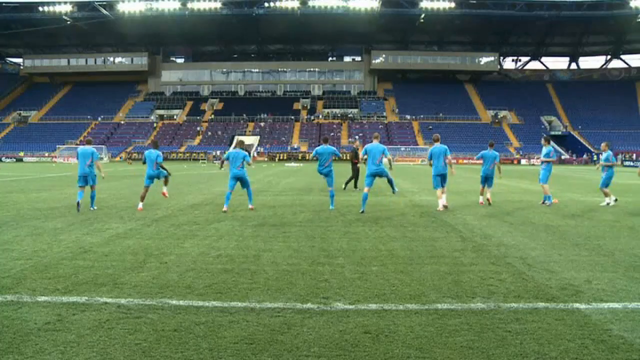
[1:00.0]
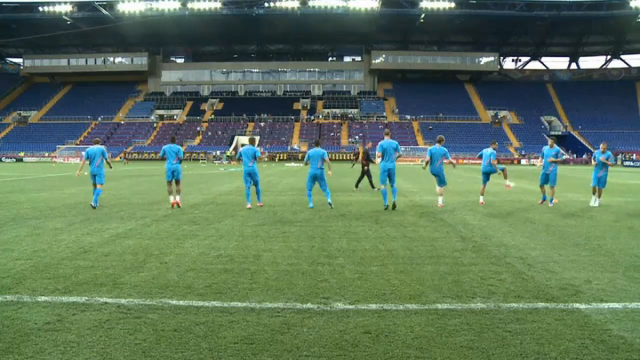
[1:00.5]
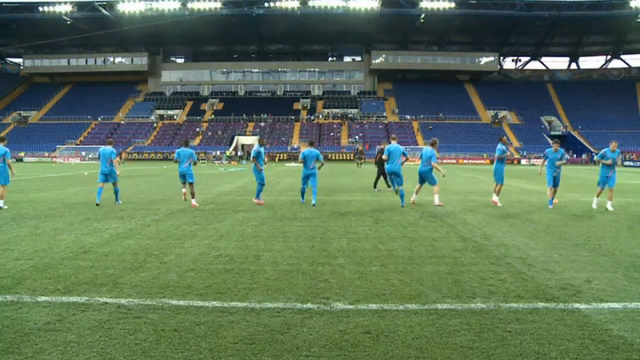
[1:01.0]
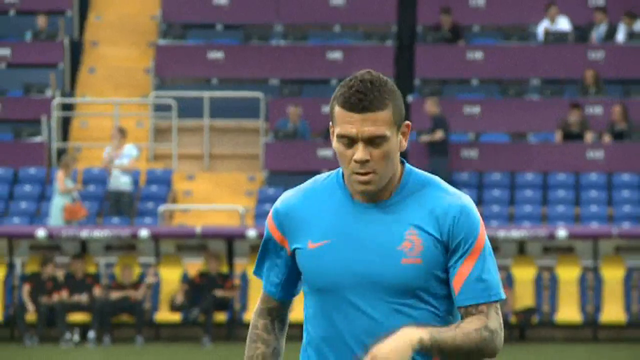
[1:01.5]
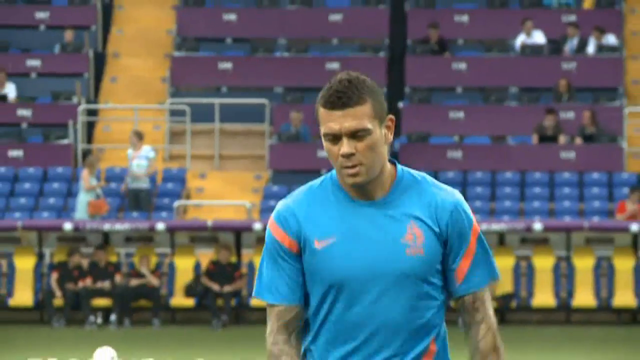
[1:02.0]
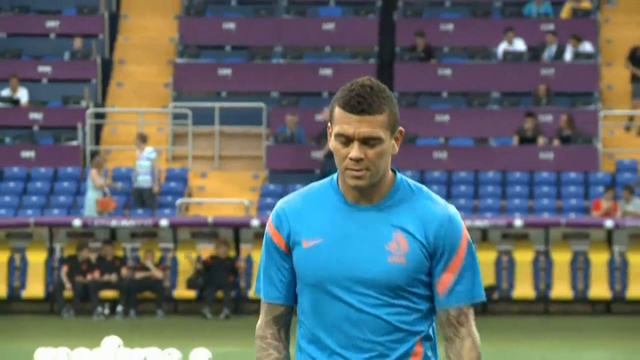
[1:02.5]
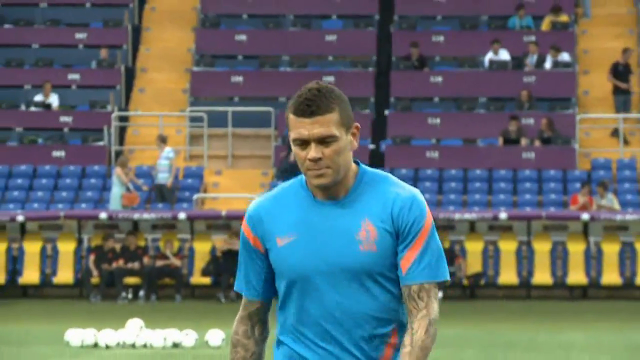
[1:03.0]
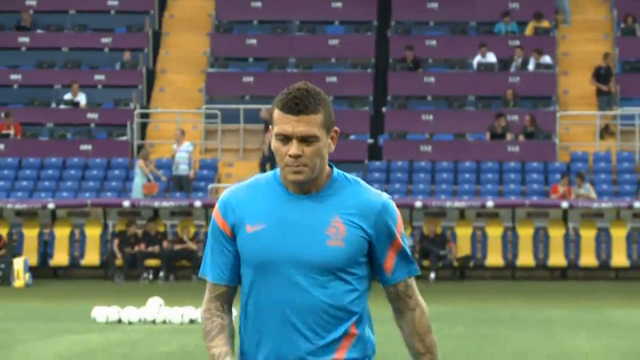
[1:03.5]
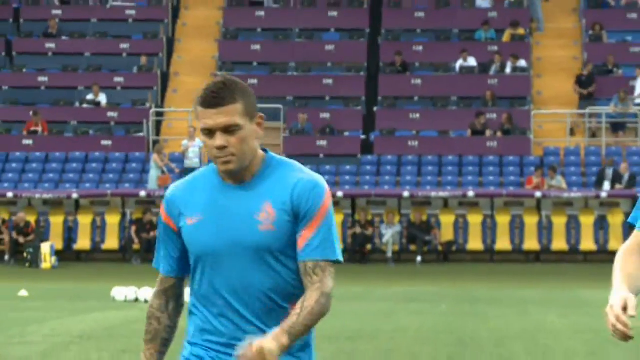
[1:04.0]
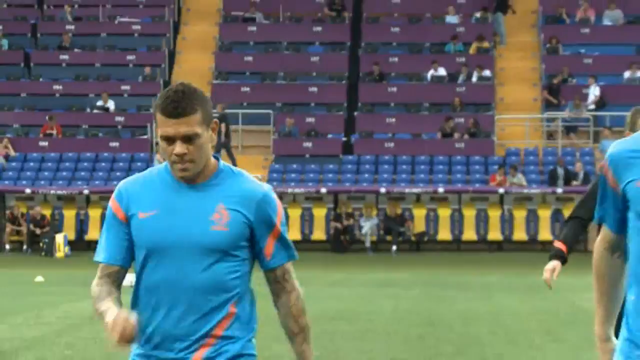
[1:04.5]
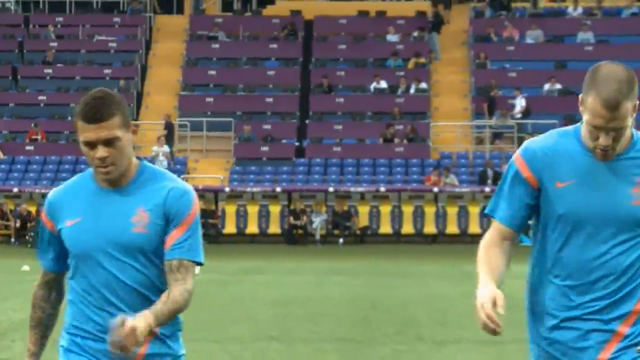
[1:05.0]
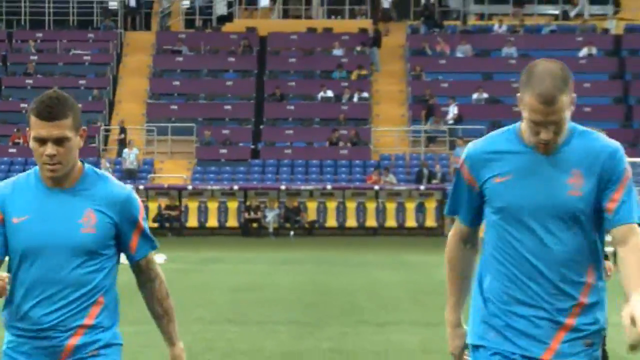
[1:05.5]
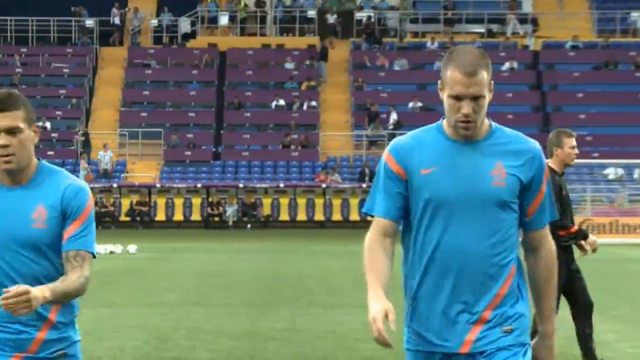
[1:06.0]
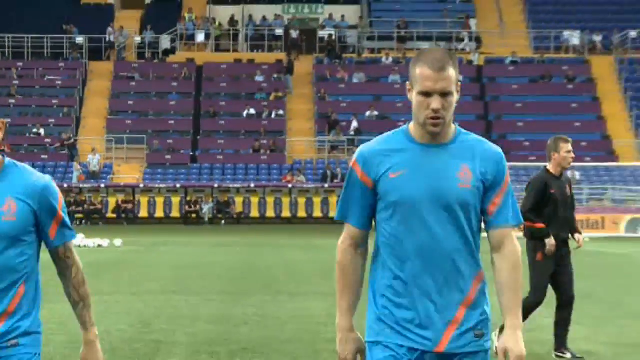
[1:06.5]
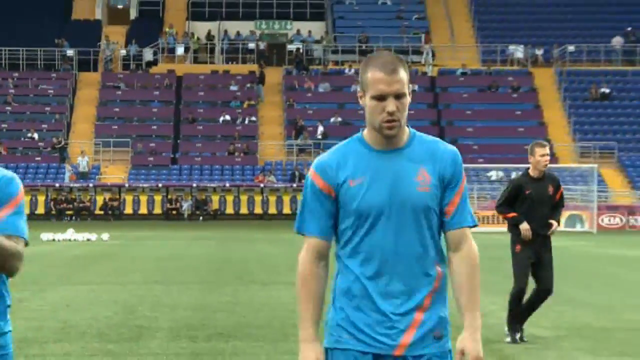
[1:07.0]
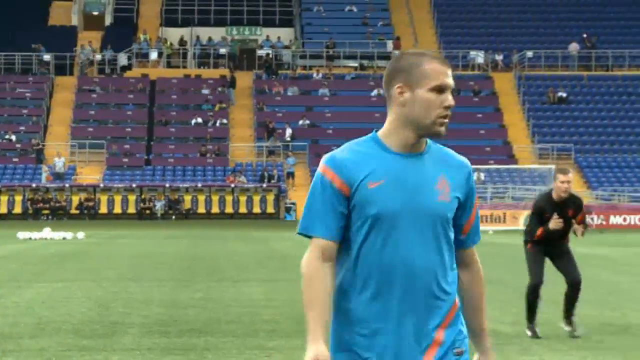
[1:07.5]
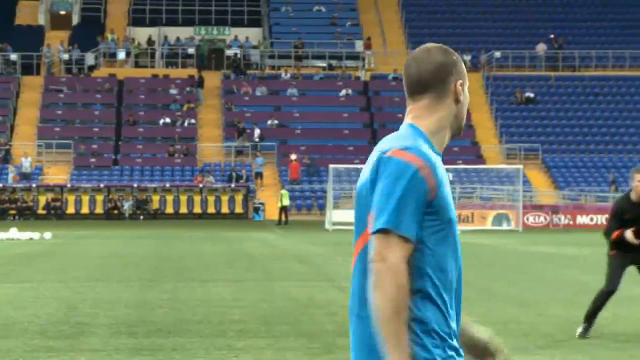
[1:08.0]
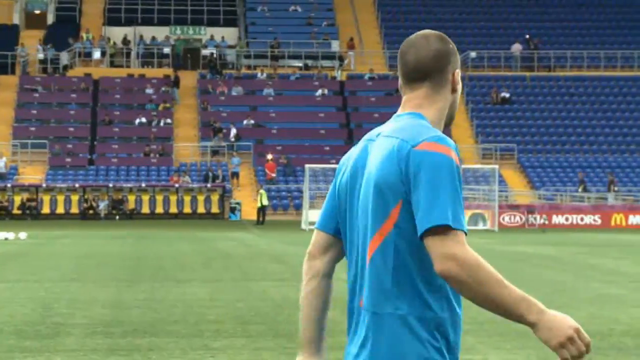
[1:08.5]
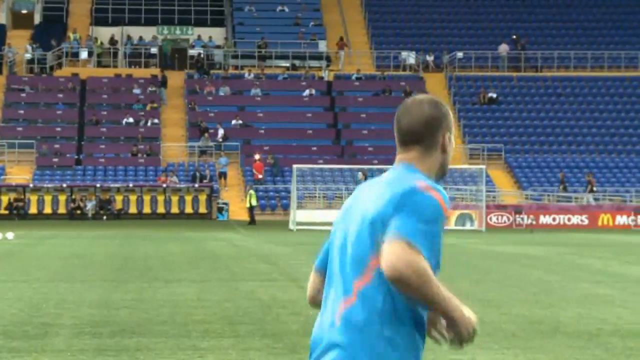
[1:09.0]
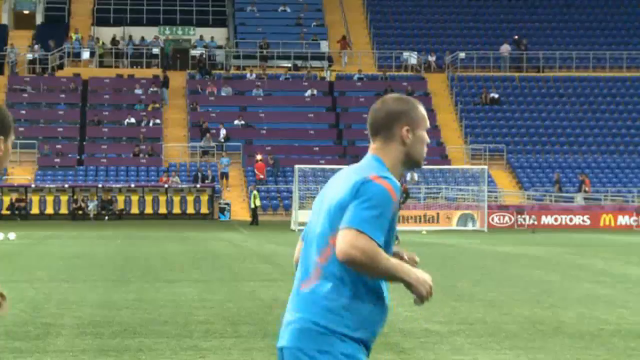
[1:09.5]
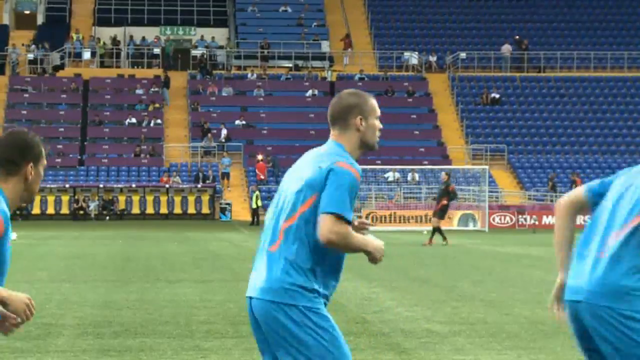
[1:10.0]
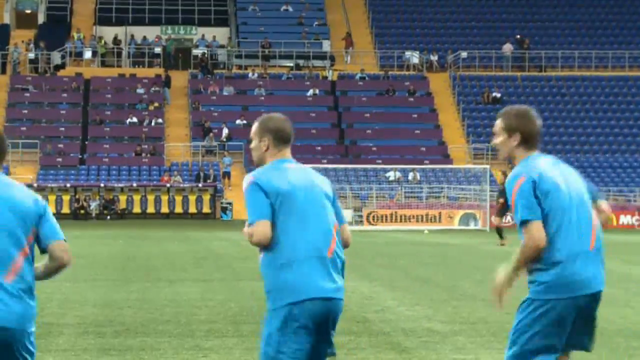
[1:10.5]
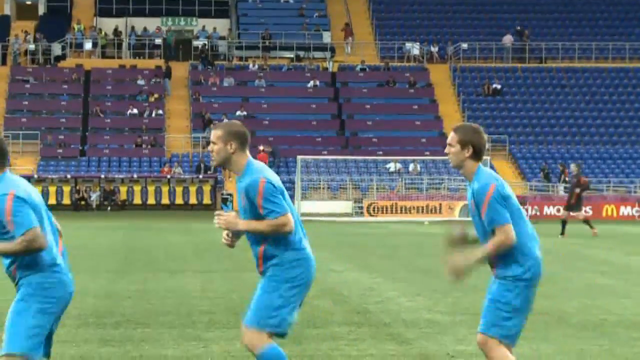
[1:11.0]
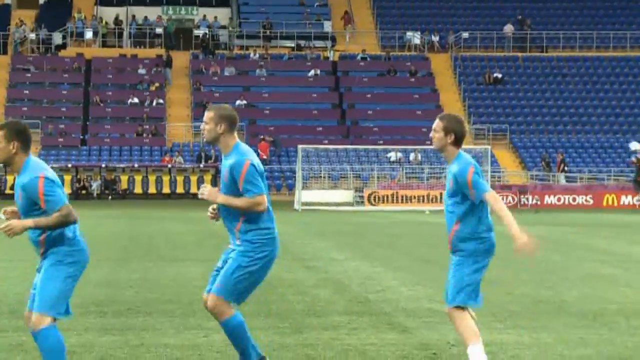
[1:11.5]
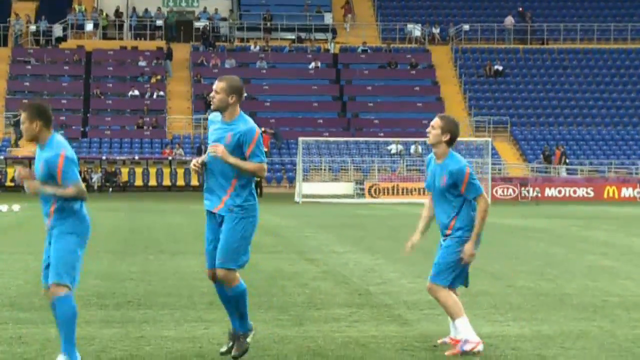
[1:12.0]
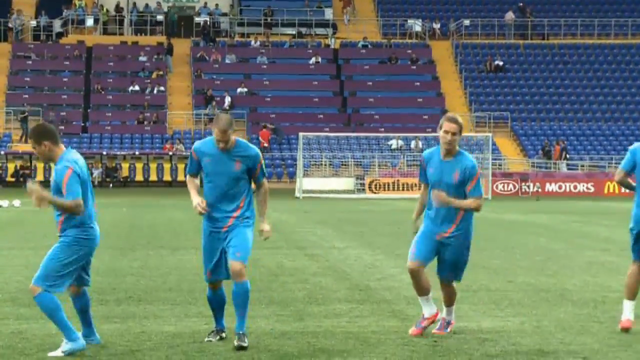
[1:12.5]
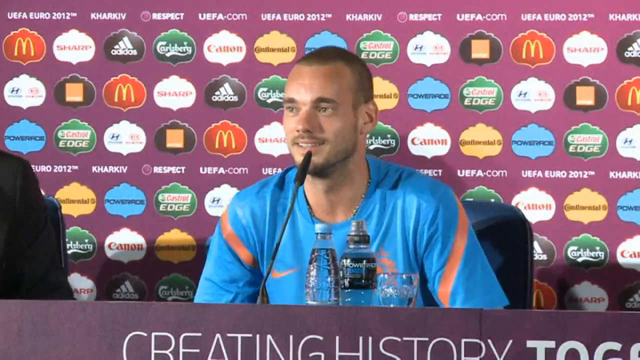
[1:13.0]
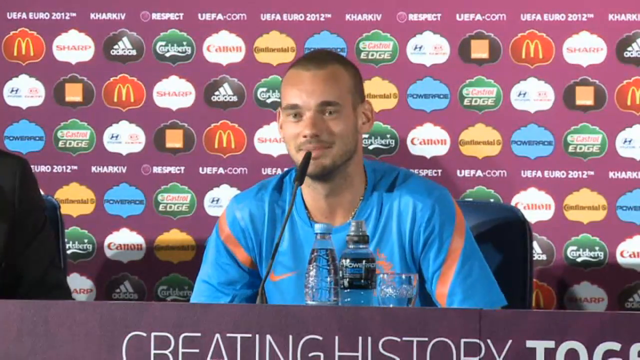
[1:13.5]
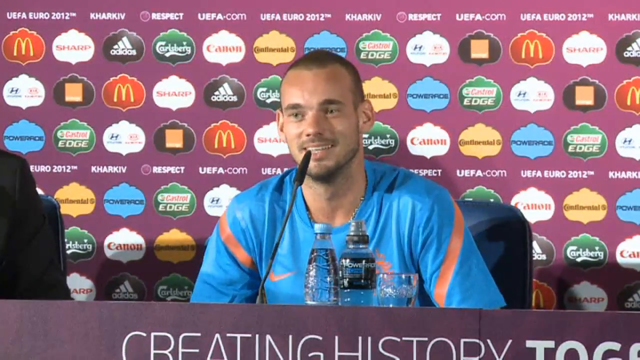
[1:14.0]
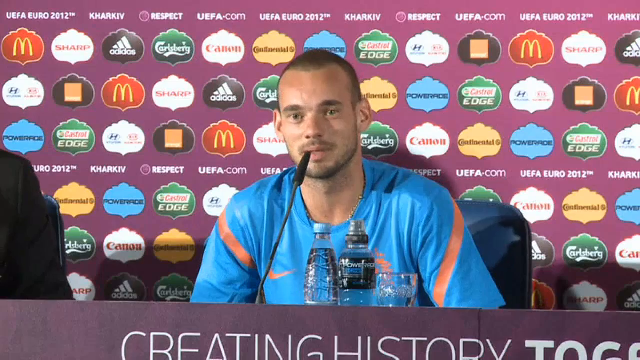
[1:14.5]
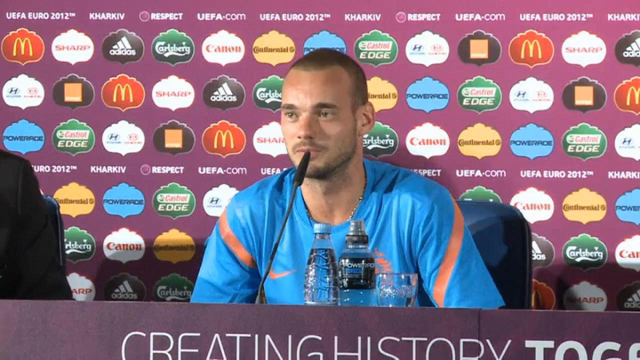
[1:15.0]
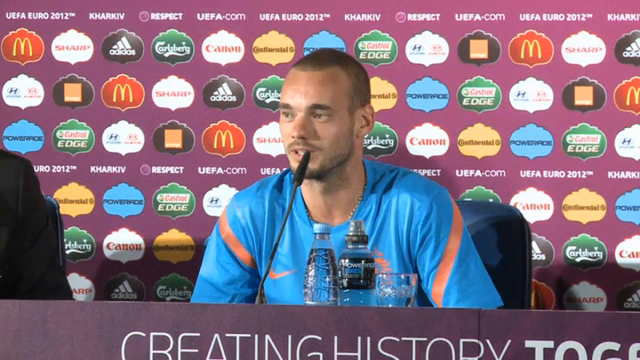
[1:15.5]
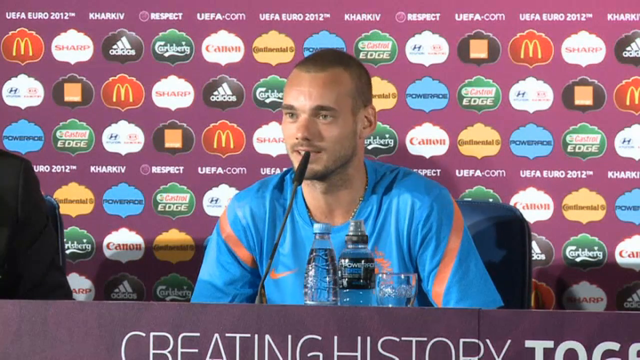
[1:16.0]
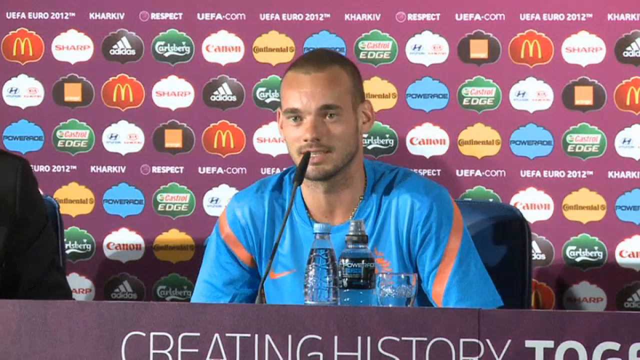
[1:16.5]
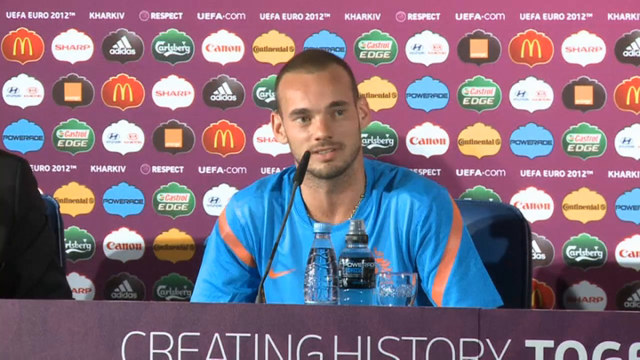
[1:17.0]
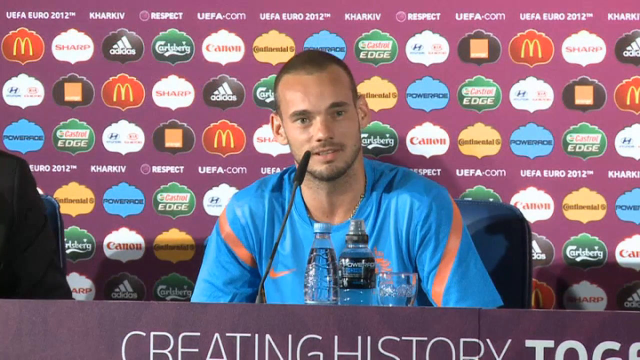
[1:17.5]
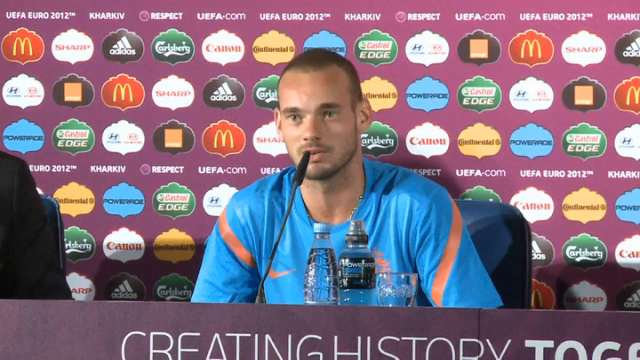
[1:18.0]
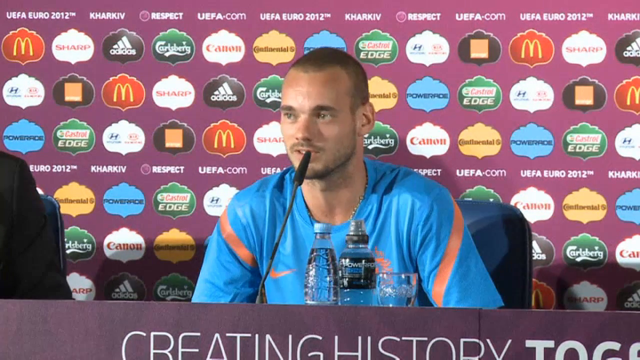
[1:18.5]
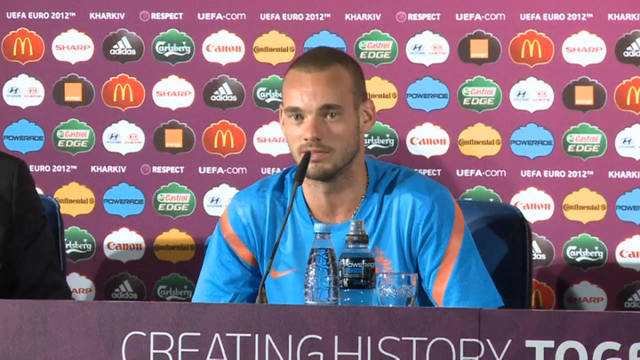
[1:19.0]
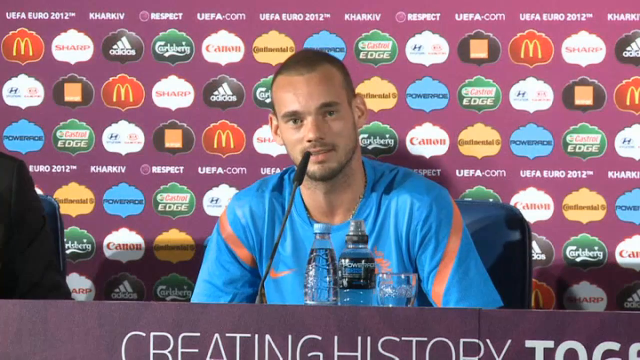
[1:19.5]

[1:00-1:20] Something flies across the screen as the players continue to warm up and stretch. One soccer player walks across the field toward the camera; he has short brown hair, is very tan, has something like a fade around the front, and has tattoos down each arm. The stadium has a sprinkle of people. The camera swings to the right to show another soccer player, a taller white man, also walking toward the camera; he turns around to face the stadium. Three of the players are then on screen doing their warm-up: they pivot, shuffle to the side and jog back. The video cuts to a soccer player sitting at a press conference, looking over to the left side of the room with a little grin on his face. He sits with his arms below the table, slightly leaned forward, then turns and looks to the middle of the room, answers, and looks to the left again. His eyes are wide, and he sits with a slight slouch but has a friendly demeanor. The video appears to be from before a game, apparently a pre-game conference, since the players do not look sweaty and no highlights of an actual game are shown. None of the jerseys have names or numbers on them, so it is hard to tell whether they are the official jerseys.